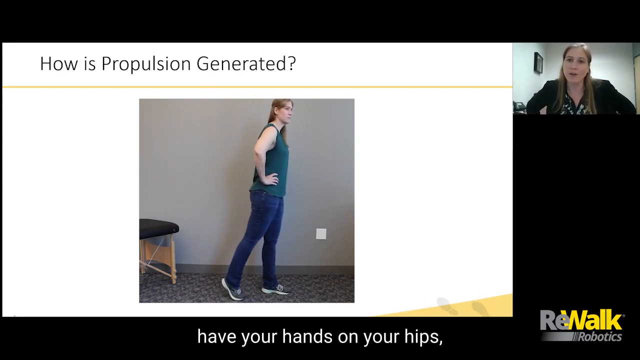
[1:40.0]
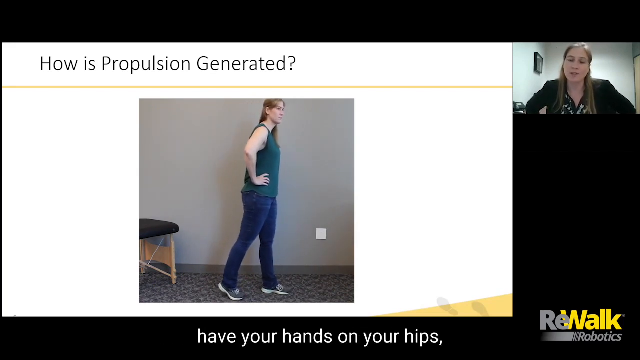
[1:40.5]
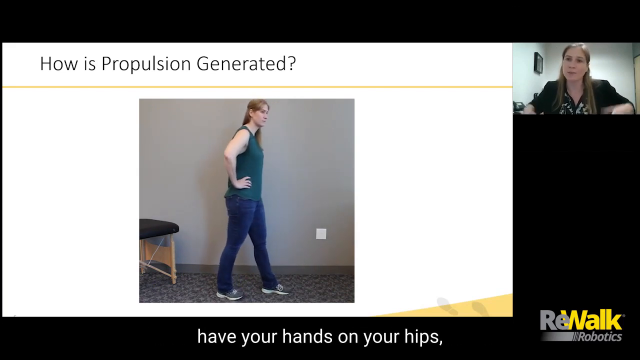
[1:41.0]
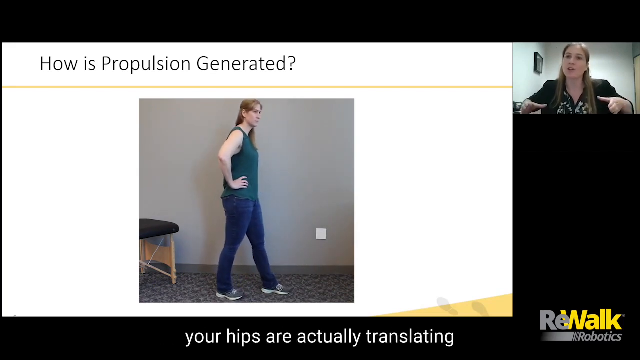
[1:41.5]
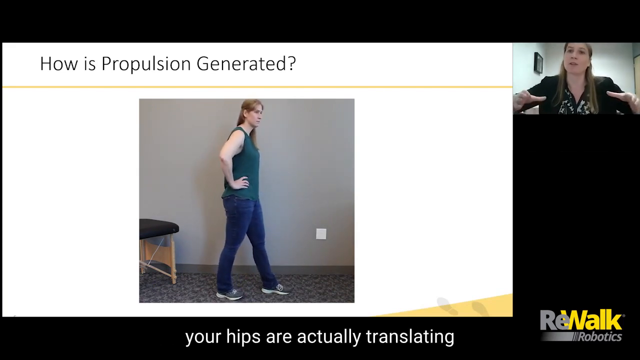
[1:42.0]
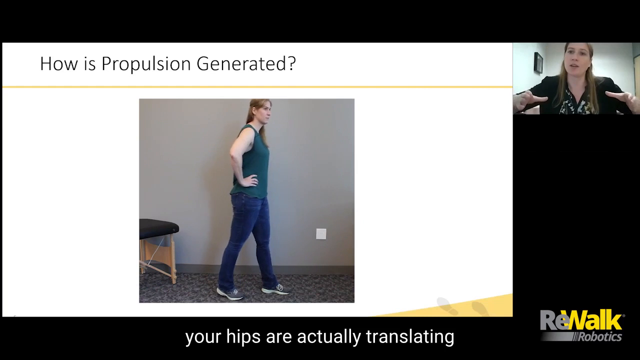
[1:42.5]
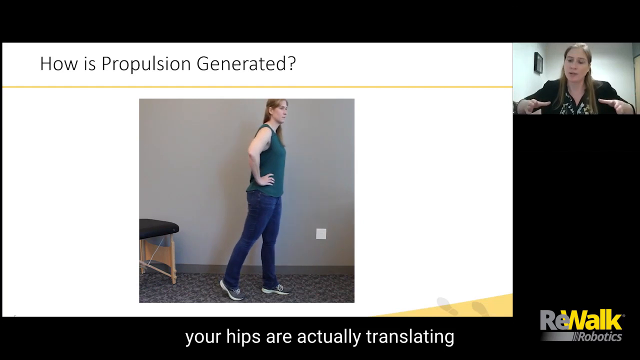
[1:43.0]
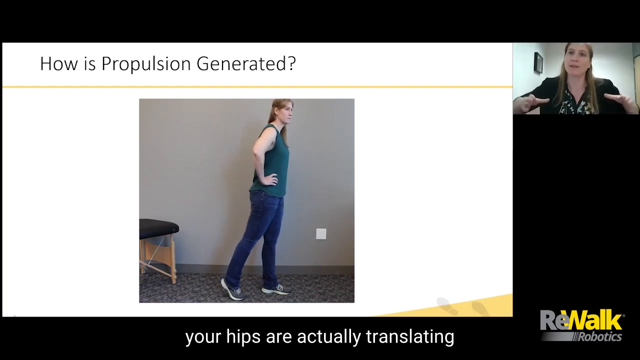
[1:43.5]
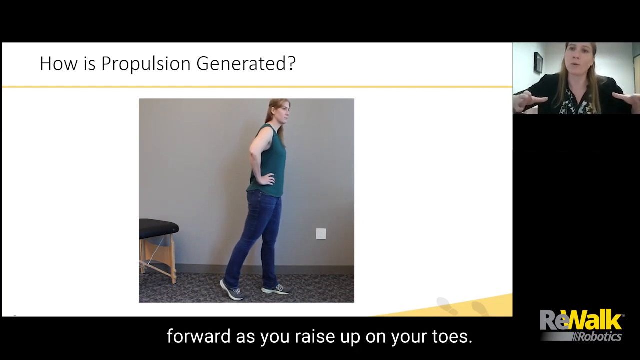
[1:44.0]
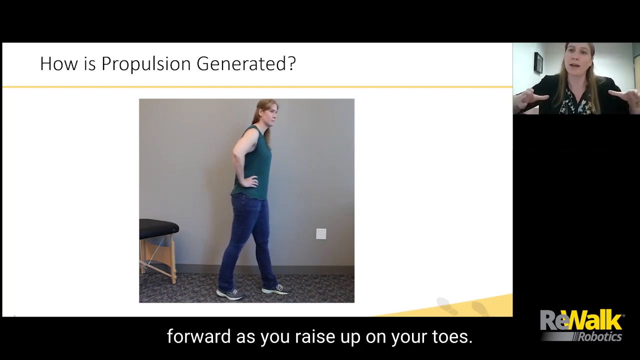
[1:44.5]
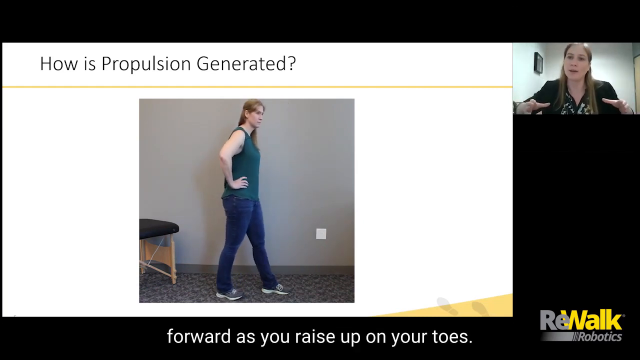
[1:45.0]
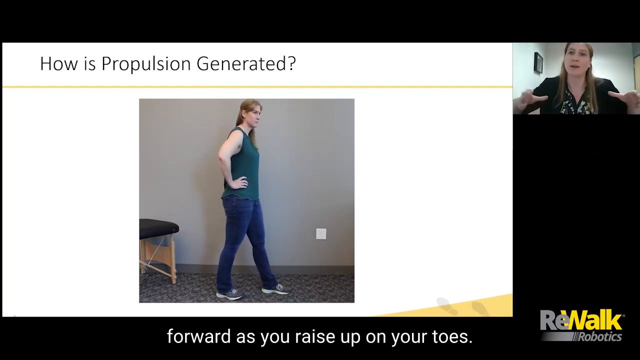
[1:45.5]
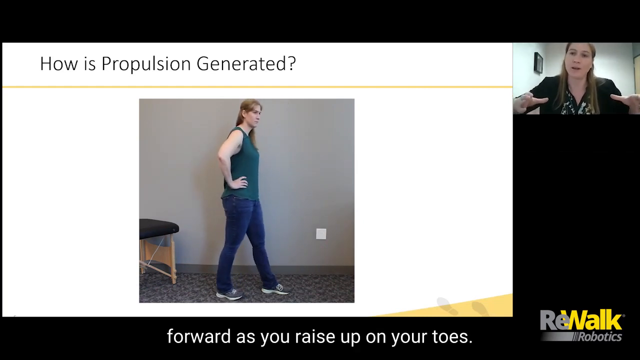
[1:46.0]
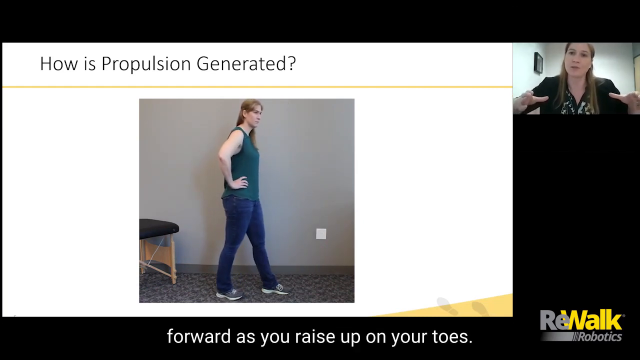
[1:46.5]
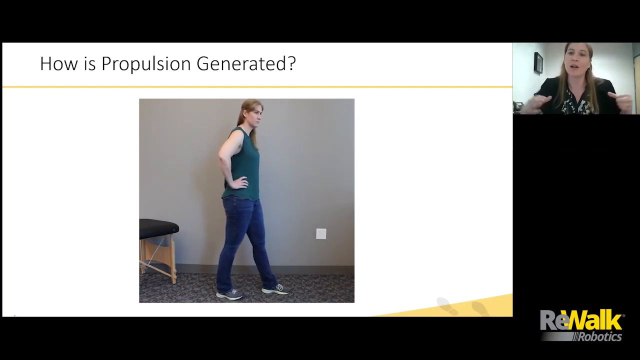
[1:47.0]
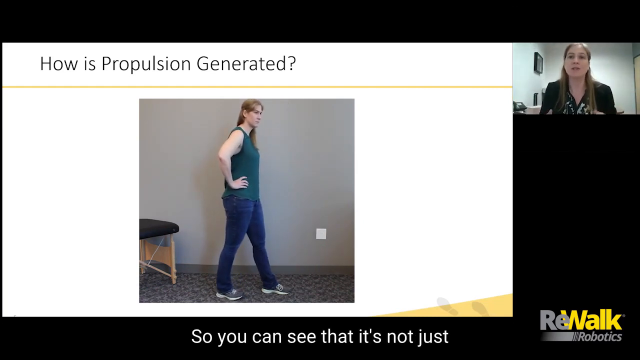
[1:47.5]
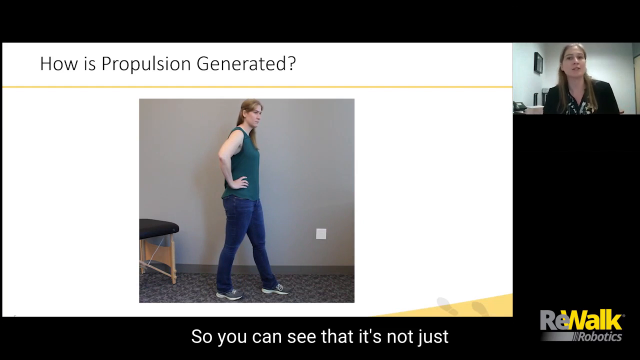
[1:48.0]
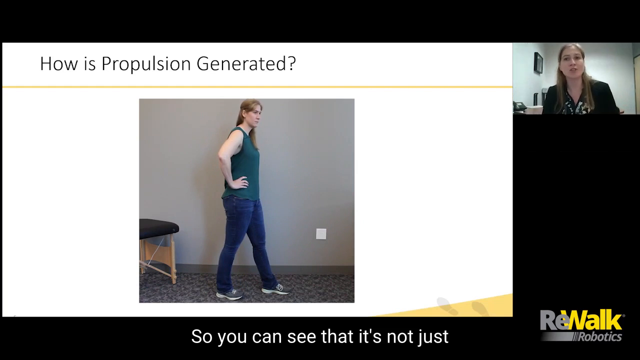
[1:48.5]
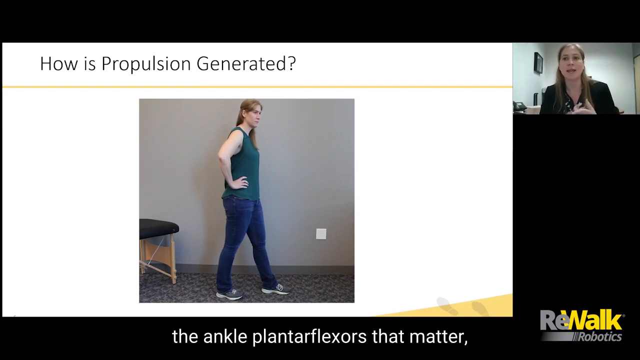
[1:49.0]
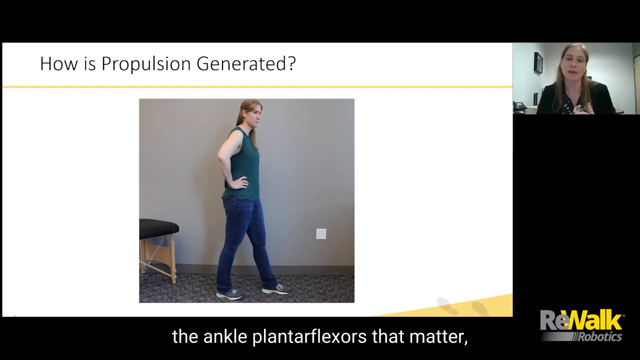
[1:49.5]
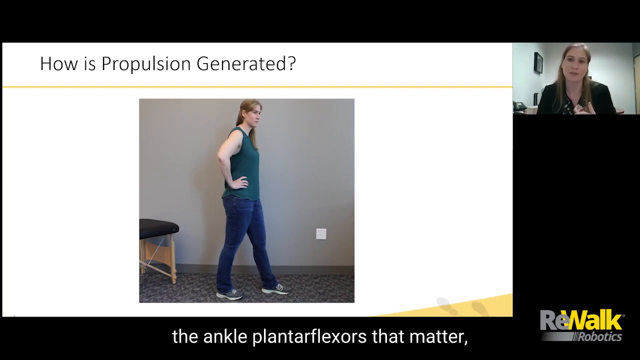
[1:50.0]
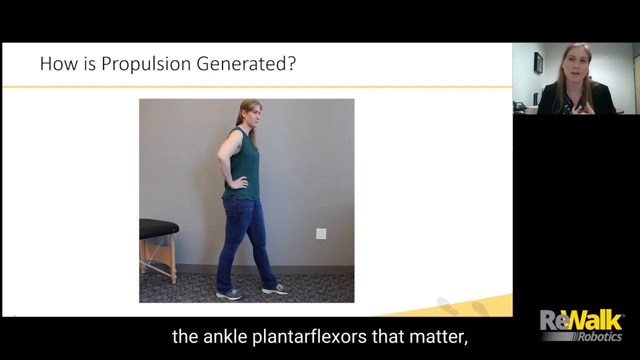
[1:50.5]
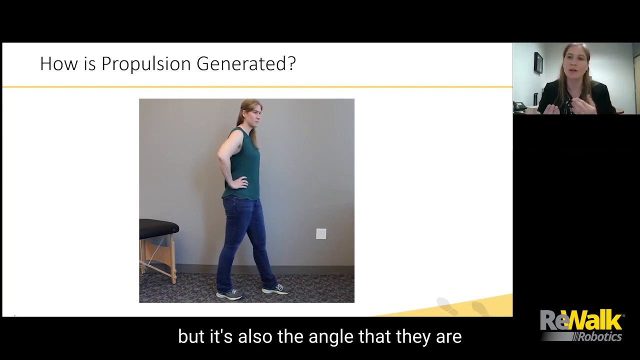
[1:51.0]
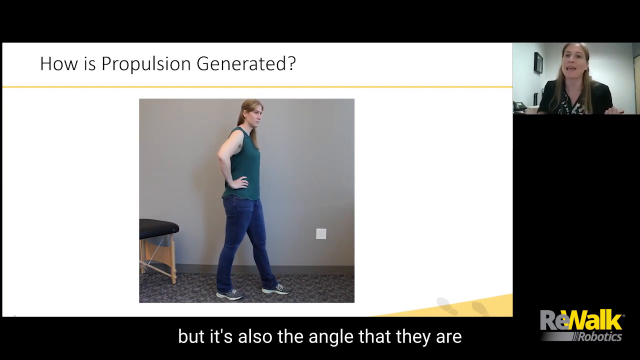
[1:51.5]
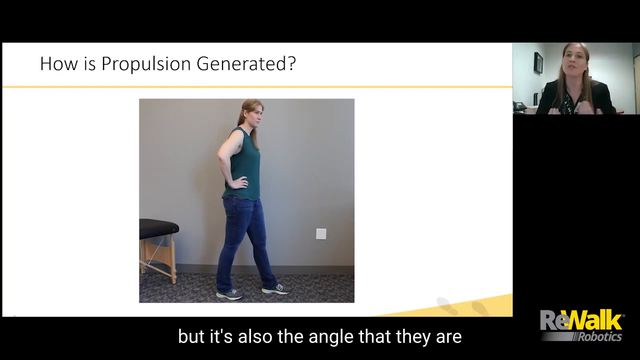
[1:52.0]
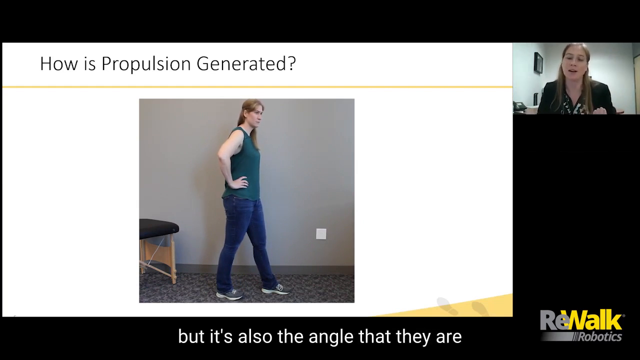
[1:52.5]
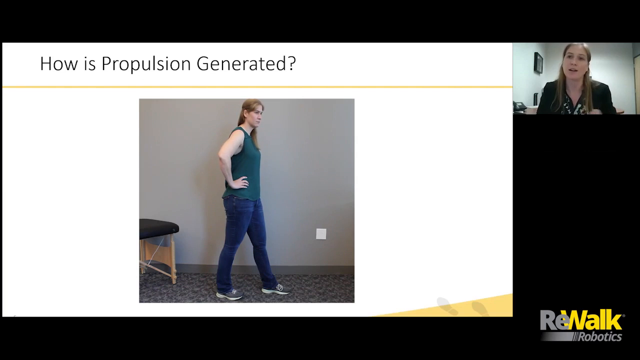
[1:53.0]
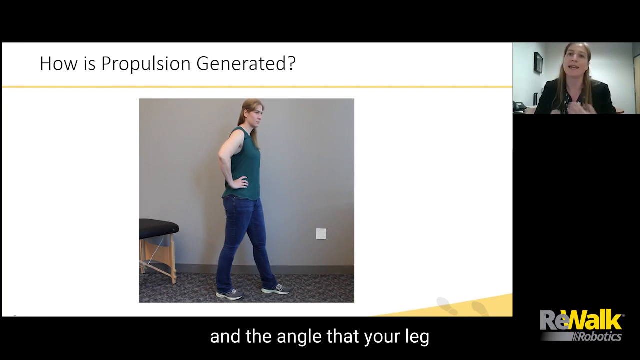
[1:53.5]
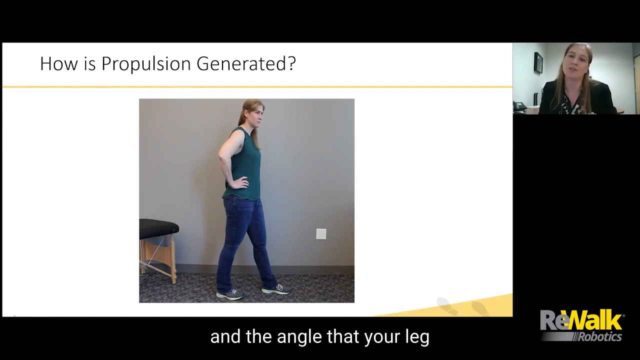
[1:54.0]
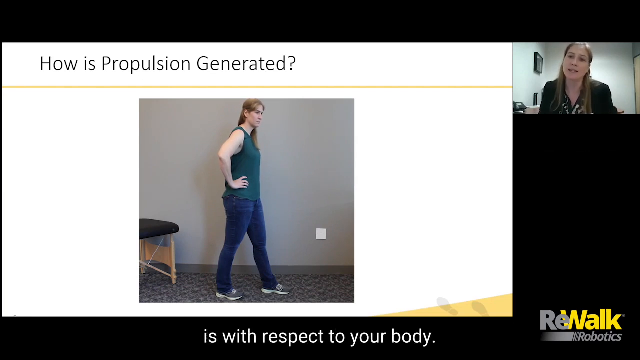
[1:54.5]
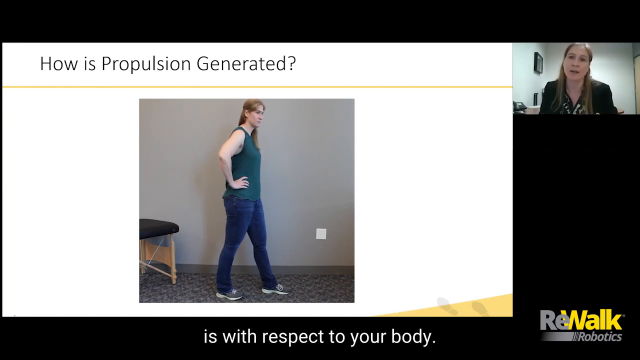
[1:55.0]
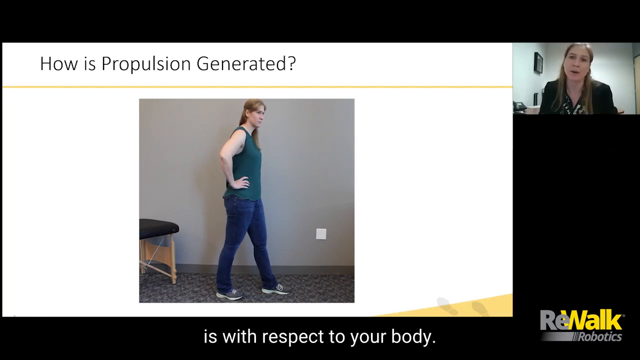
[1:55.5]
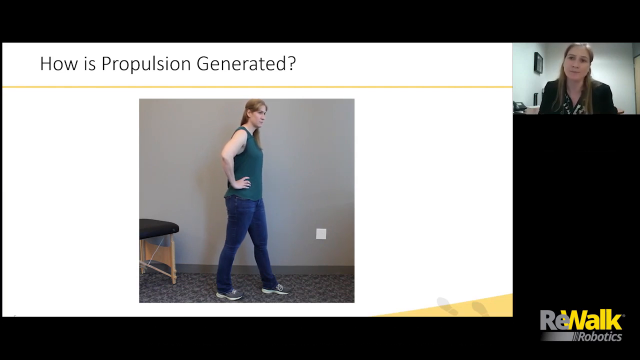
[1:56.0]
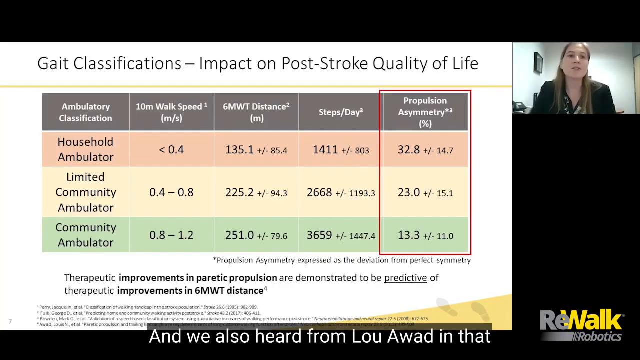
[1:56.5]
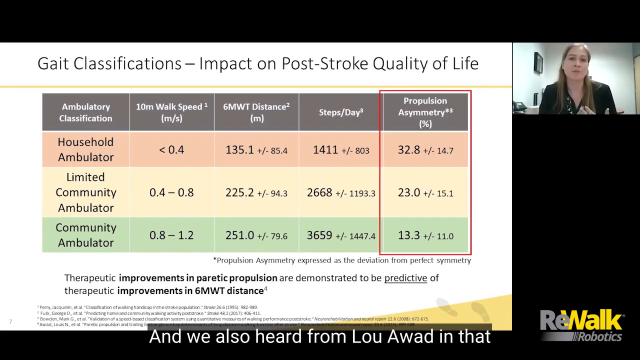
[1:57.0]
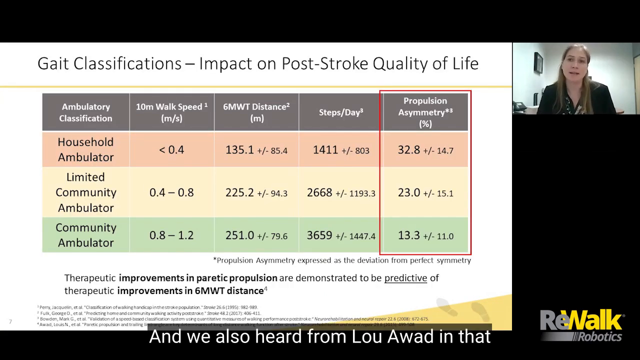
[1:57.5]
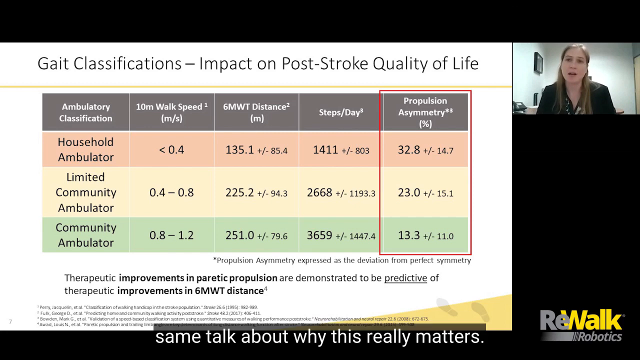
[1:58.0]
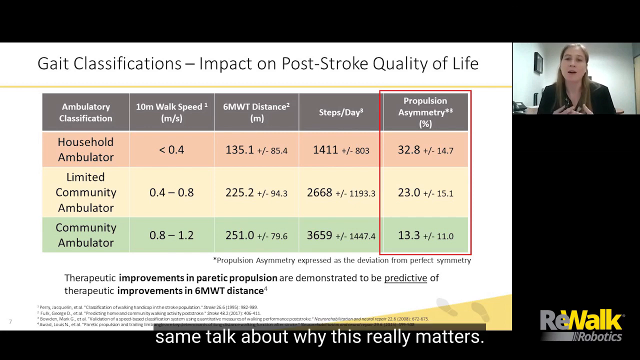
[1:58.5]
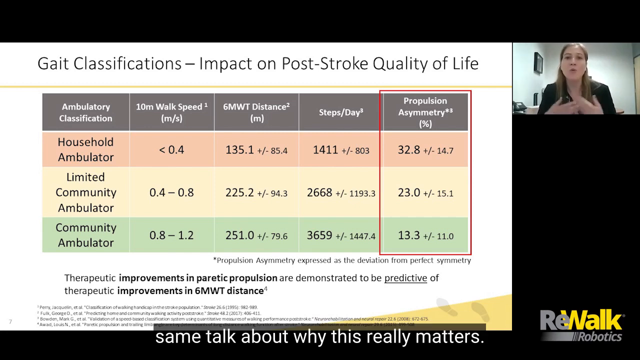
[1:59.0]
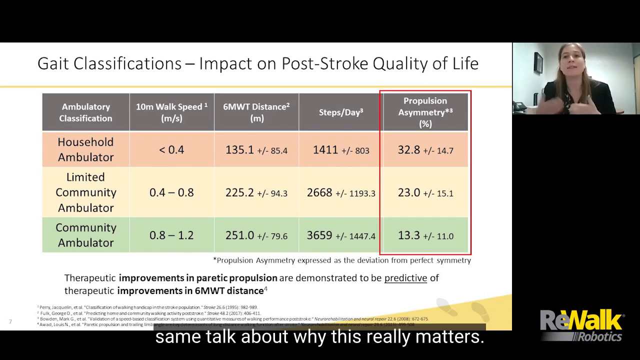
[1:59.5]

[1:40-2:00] The title is on screen, and a woman in the top right speaks to the camera. The presentation is credited to Rewalk Robotics. The same woman from the video call performs some movements with her hands on her hips. A slide then shows classifications and their impact on post-stroke quality of life, including ambulatory classifications such as household ambulatory and limited community ambulatory, along with 10 meter walk speed, 6 MWT, and steps a day.